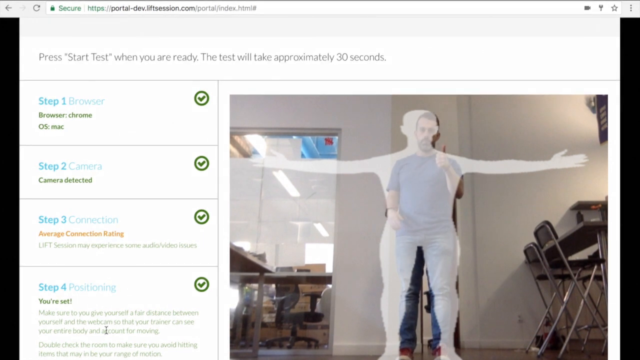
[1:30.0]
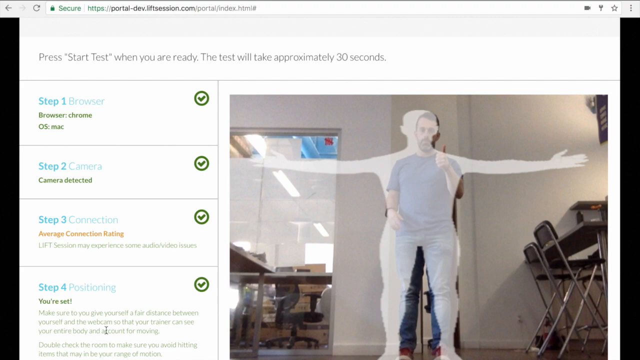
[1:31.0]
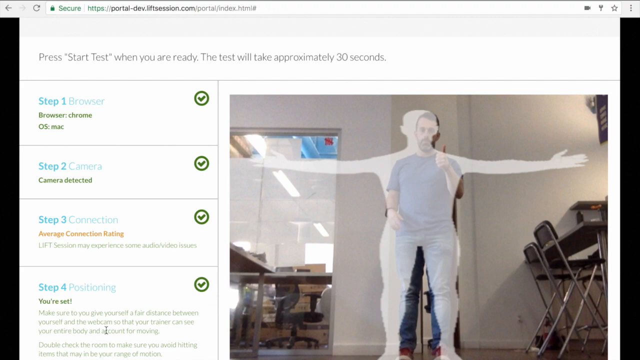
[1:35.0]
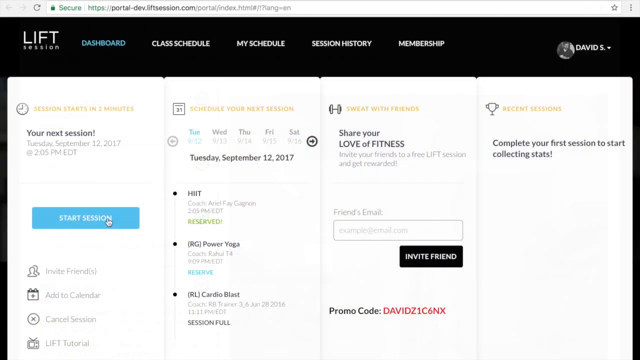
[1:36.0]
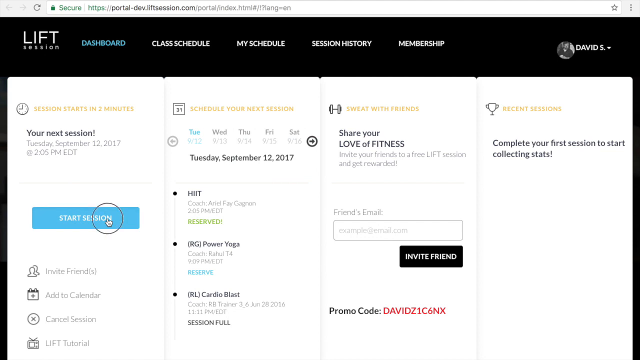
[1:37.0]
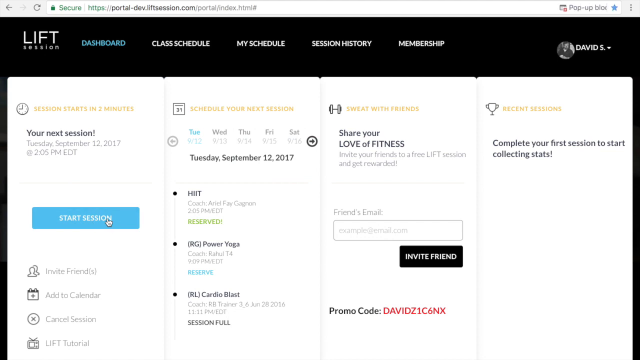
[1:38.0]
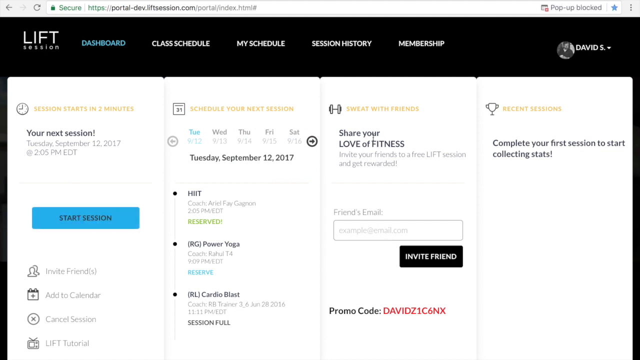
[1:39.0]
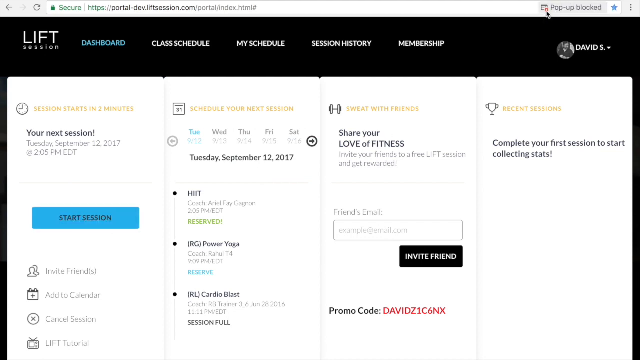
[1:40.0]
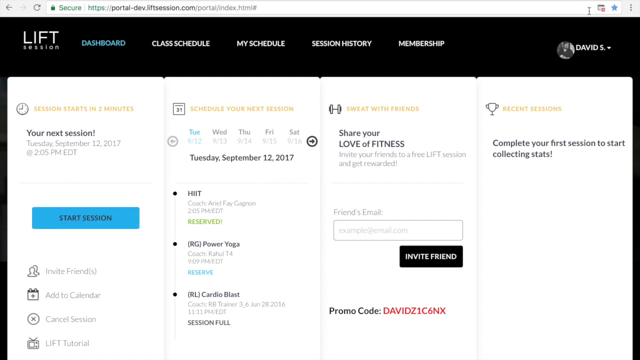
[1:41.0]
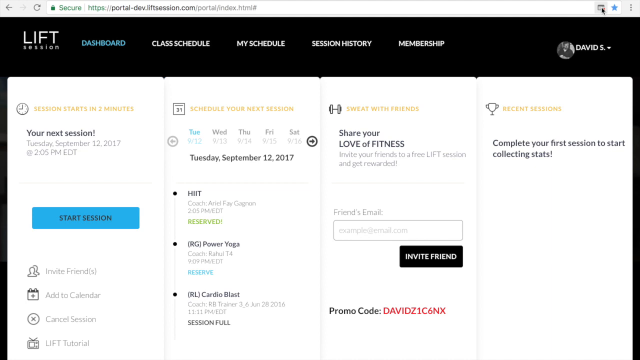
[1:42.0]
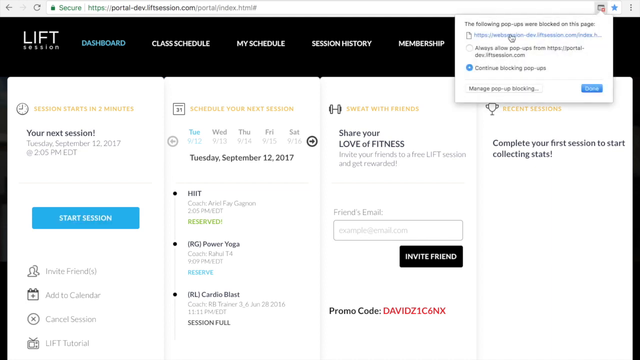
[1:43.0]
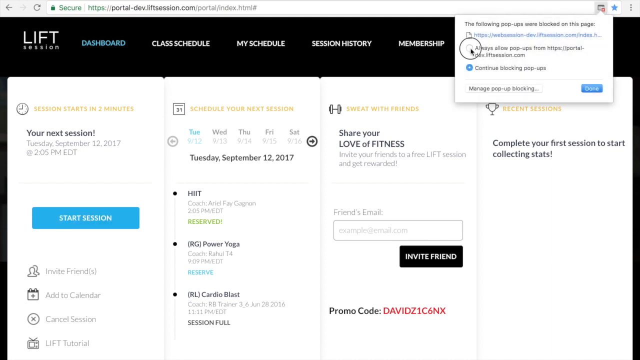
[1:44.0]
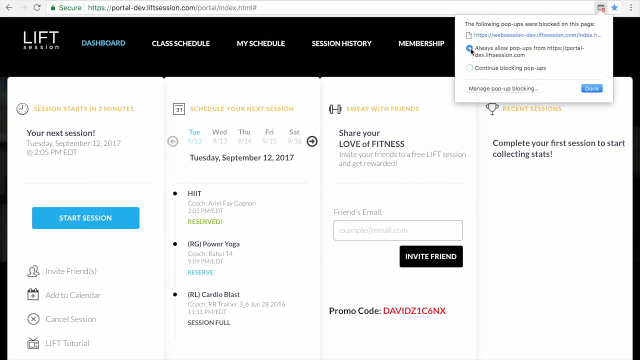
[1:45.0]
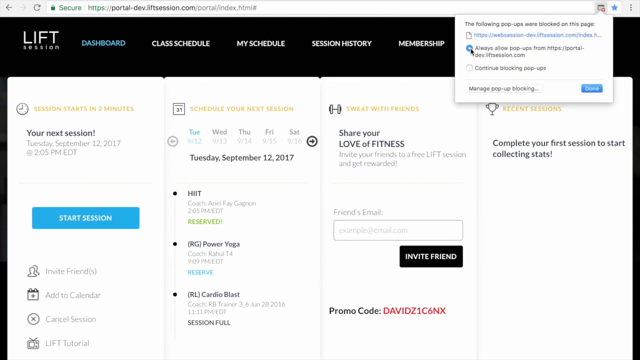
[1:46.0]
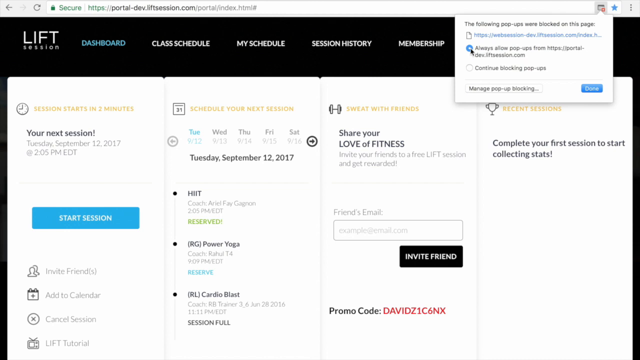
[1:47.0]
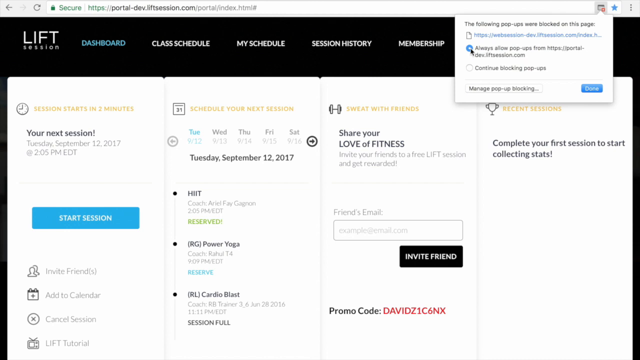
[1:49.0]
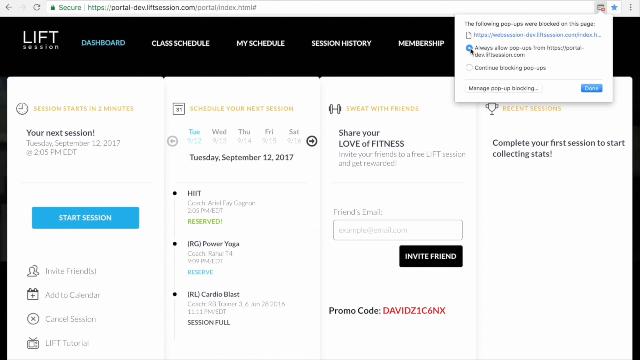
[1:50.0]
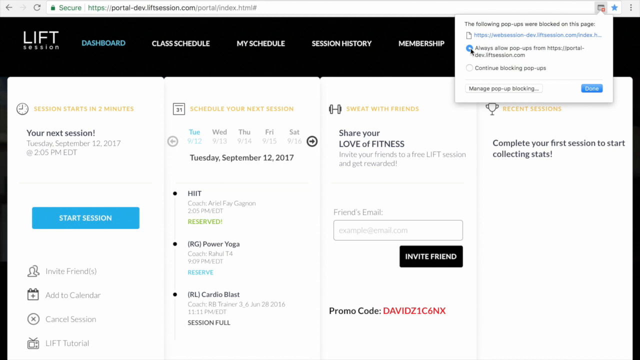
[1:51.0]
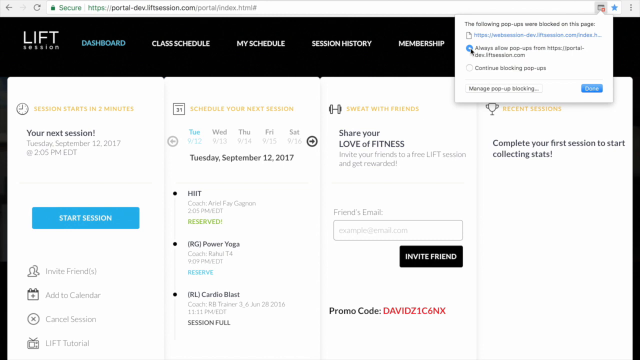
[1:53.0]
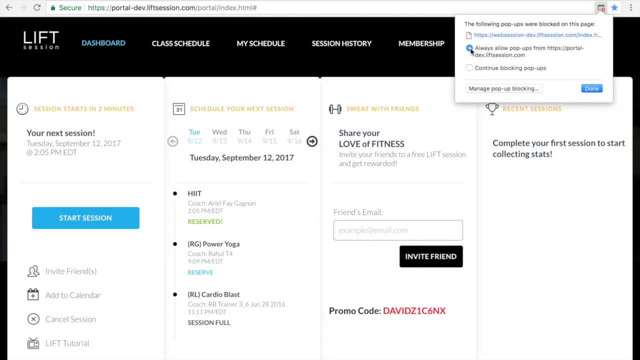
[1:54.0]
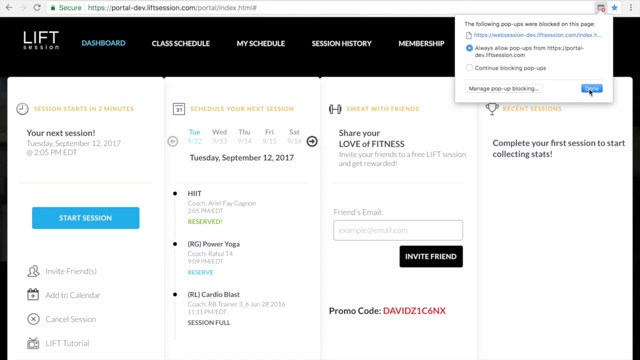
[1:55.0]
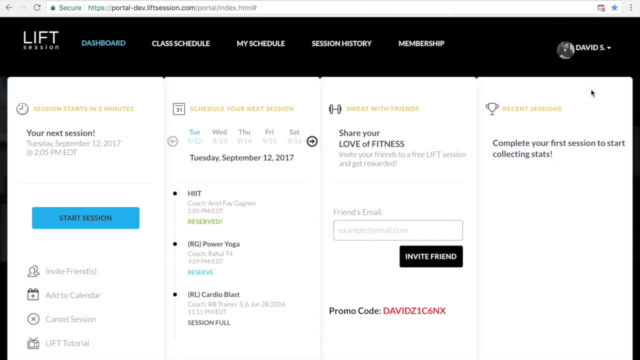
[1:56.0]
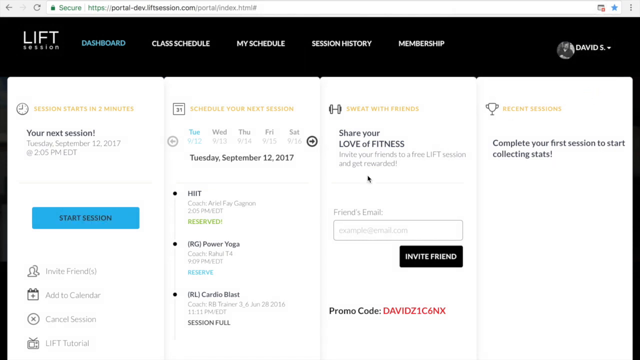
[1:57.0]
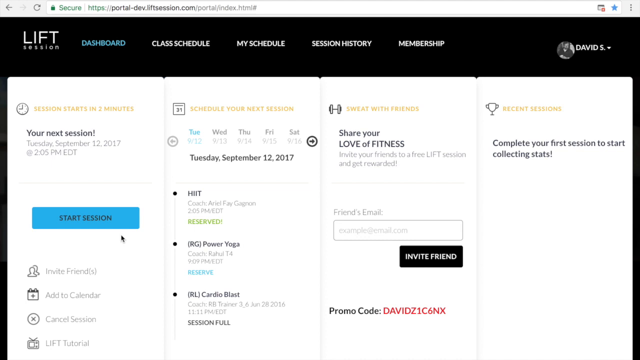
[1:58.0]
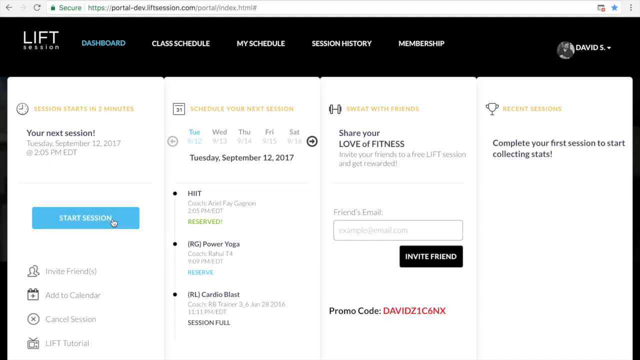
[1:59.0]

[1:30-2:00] The white web page shows gray text at the top: "press start test when you are ready. The test will take approximately 30 seconds." All four steps on the left are in blue text with green check marks on the right of each. On the right, a stream or camera shows a man standing in a white room giving a thumbs up, with a transparent gray T-posing overlay in the middle of the stream. The video fades to the LIFT Sessions main page, with the cursor over the blue "Start Session" button on the right side of the page. The cursor moves up and right across the page to text reading "Pop-up Blocked" in the upper right corner and clicks it, bringing up a pop-up. The cursor clicks an option labelled "Always allow pop-ups from https://portal-dev.liftsession.com," then moves to a blue button labelled "Close" in the lower right of the pop-up and clicks it to close the pop-up. The cursor moves left across the page, hovers over the blue Start Session button, and clicks it.